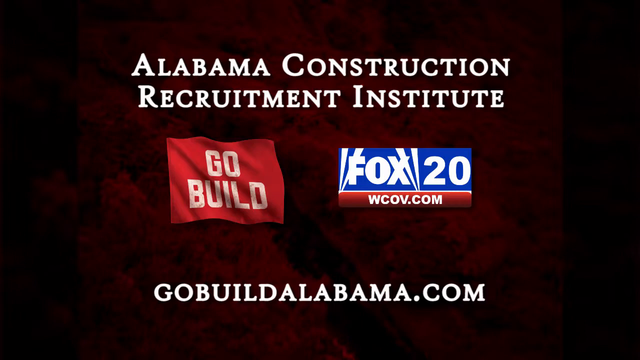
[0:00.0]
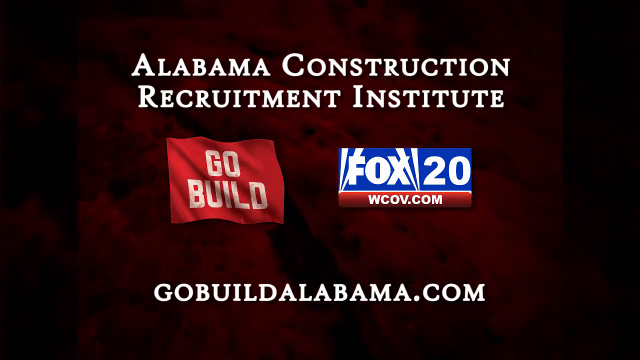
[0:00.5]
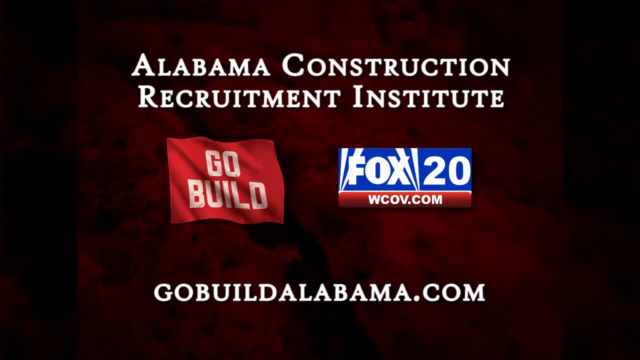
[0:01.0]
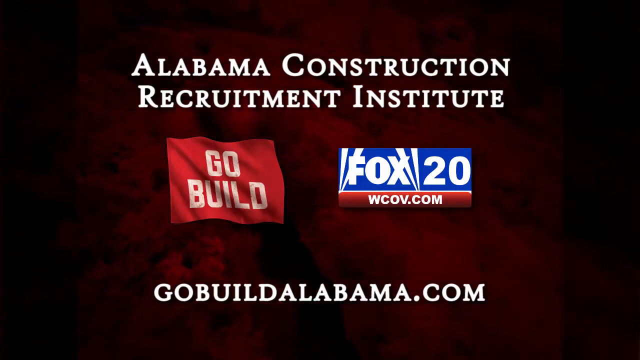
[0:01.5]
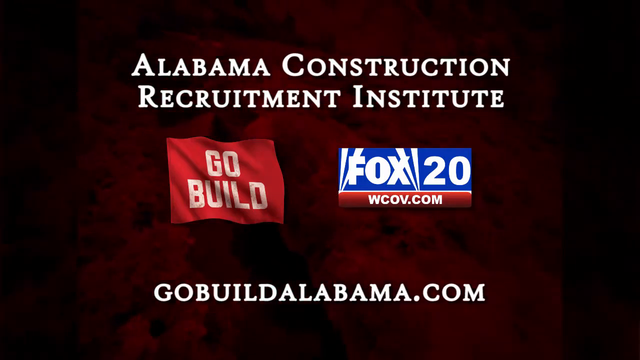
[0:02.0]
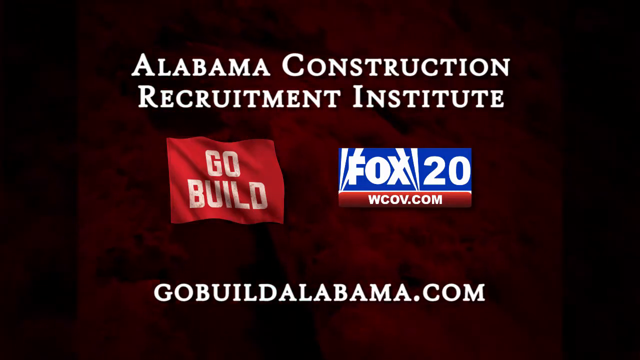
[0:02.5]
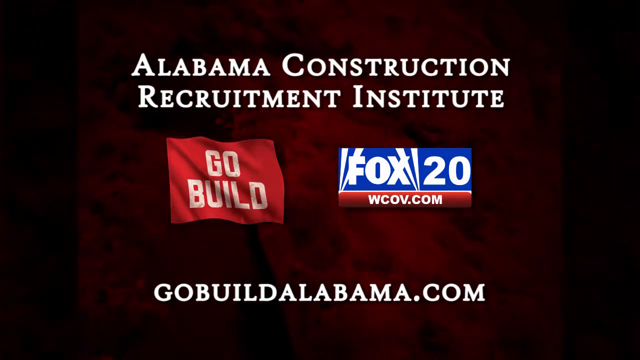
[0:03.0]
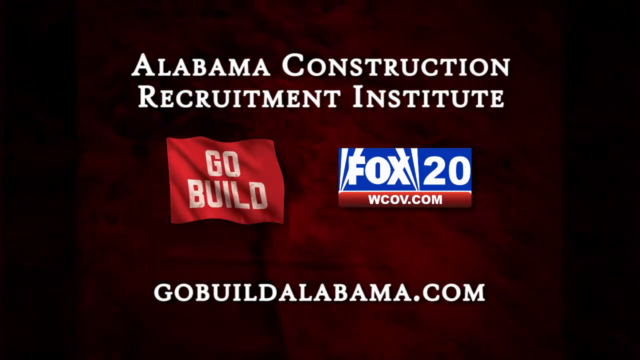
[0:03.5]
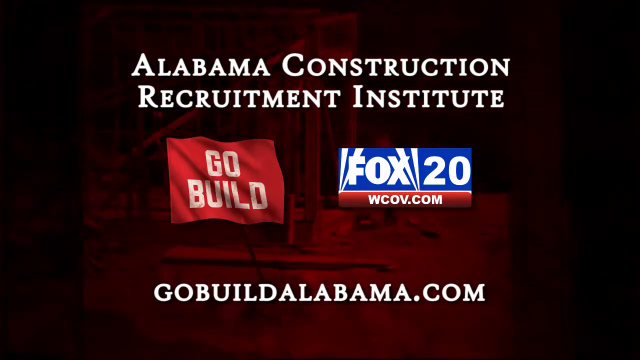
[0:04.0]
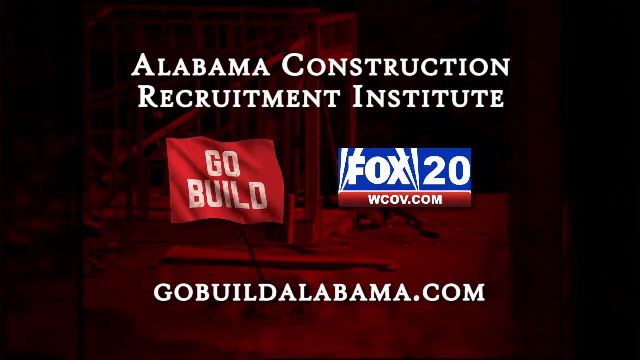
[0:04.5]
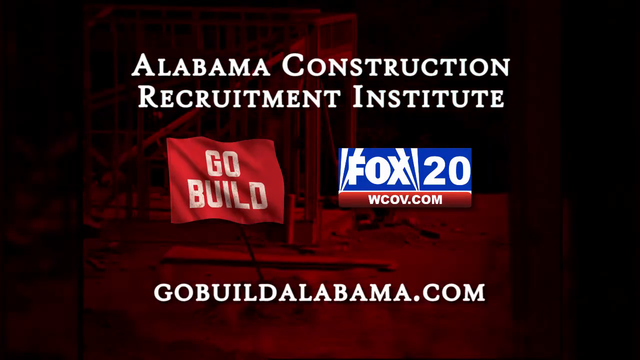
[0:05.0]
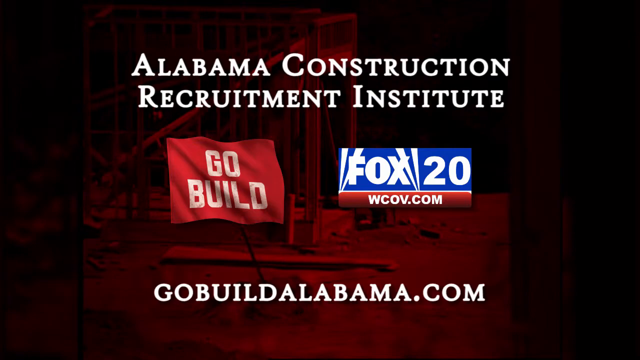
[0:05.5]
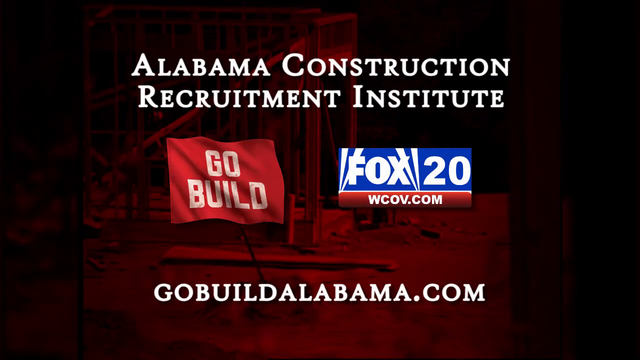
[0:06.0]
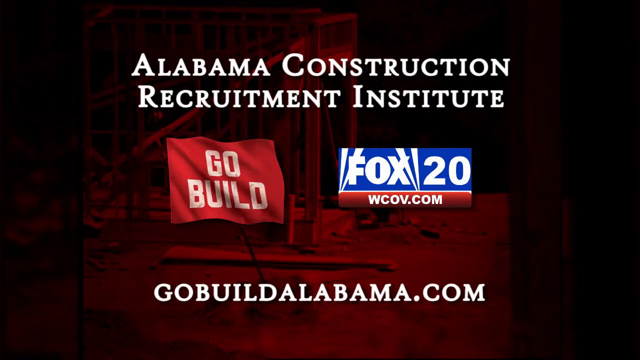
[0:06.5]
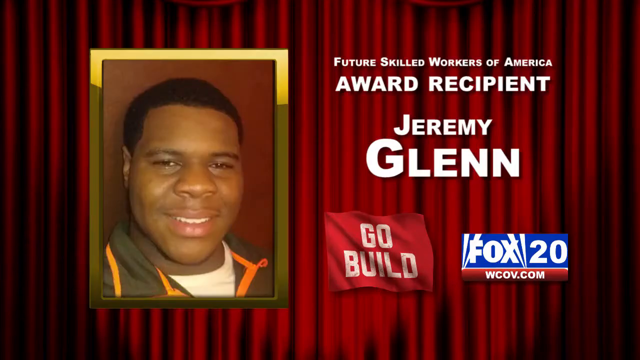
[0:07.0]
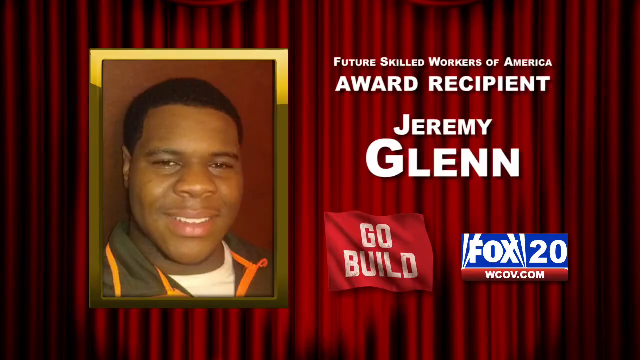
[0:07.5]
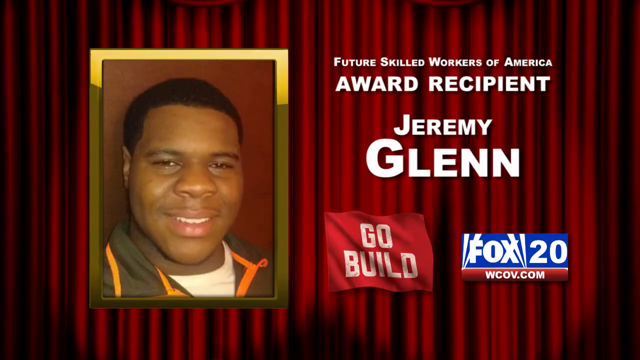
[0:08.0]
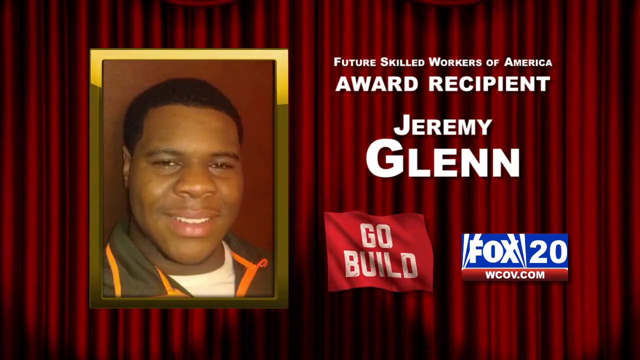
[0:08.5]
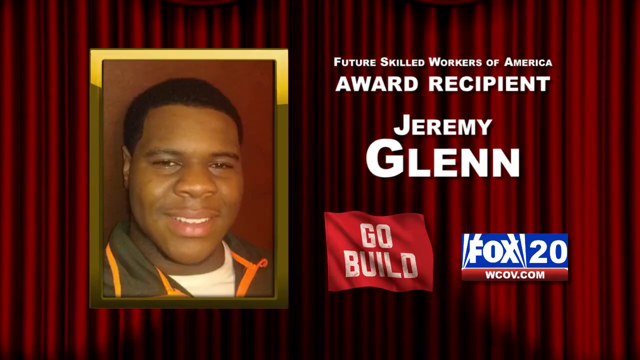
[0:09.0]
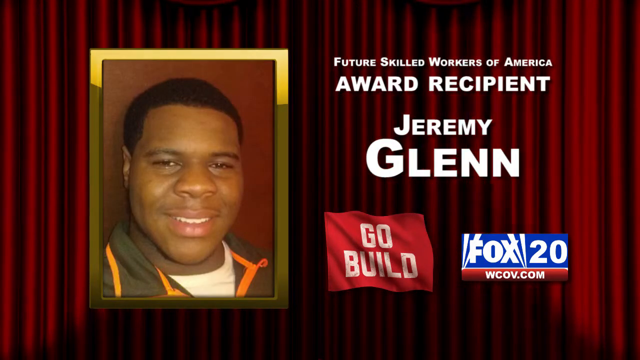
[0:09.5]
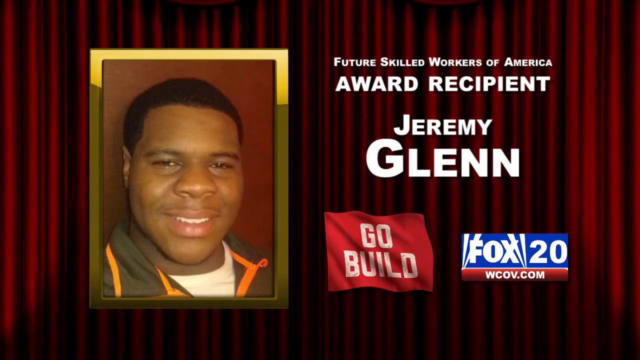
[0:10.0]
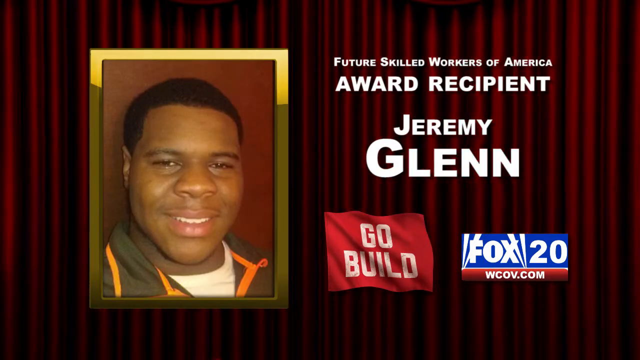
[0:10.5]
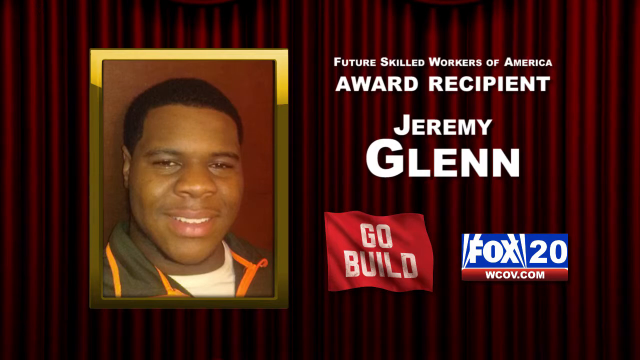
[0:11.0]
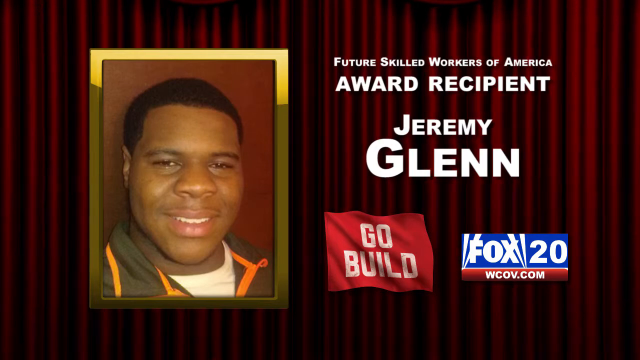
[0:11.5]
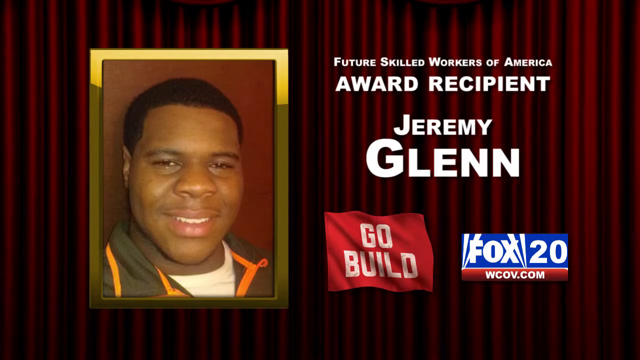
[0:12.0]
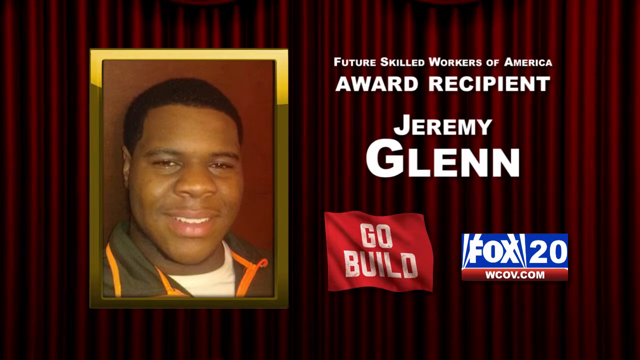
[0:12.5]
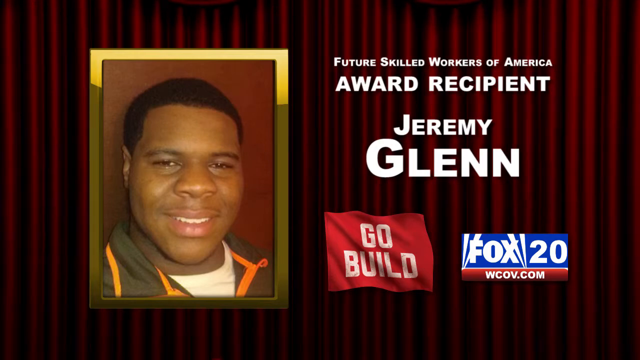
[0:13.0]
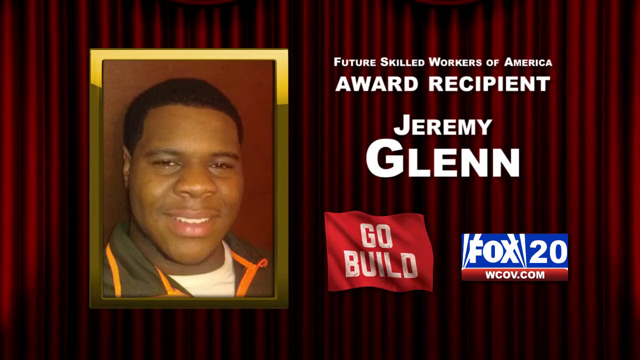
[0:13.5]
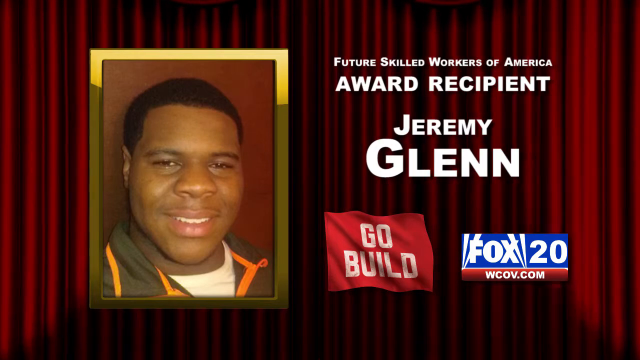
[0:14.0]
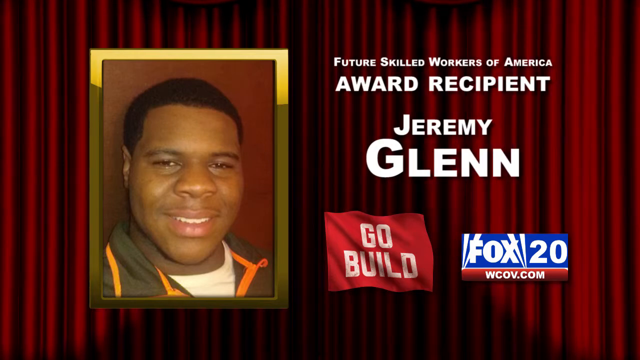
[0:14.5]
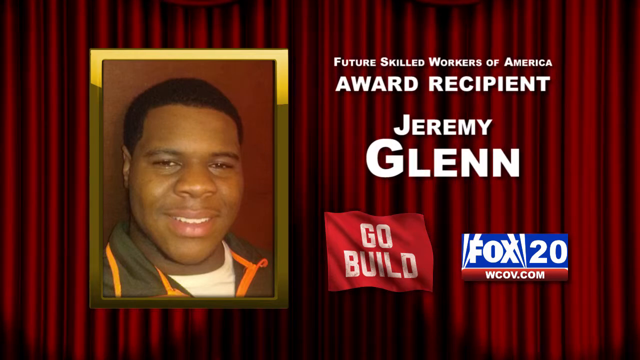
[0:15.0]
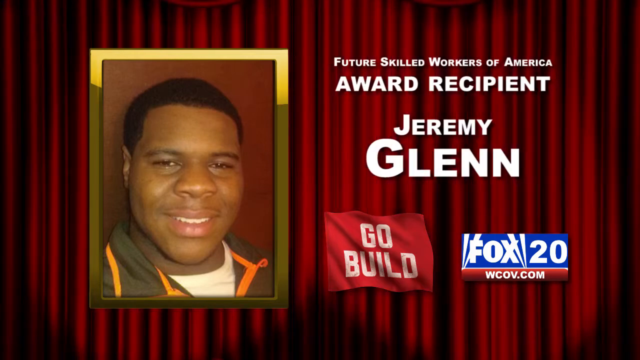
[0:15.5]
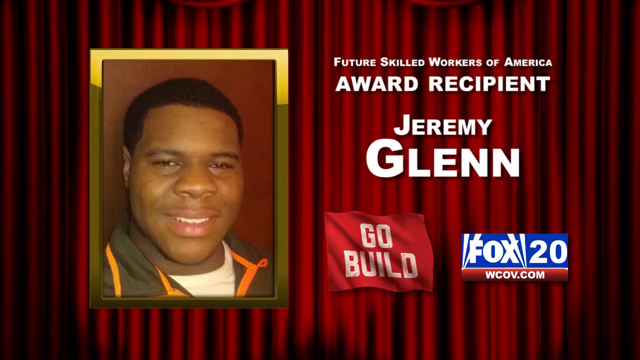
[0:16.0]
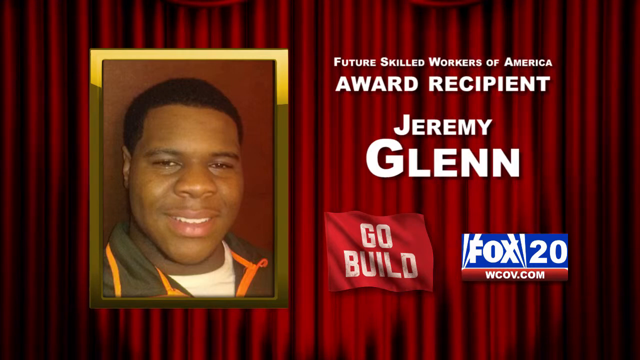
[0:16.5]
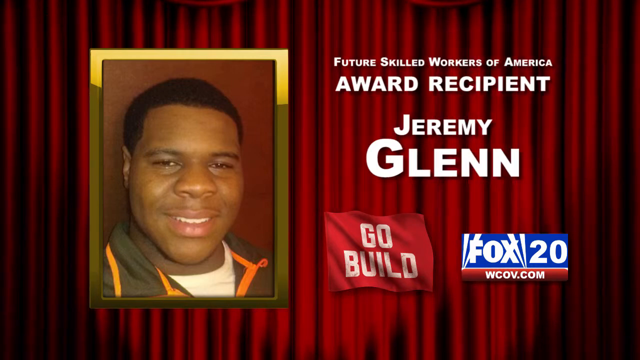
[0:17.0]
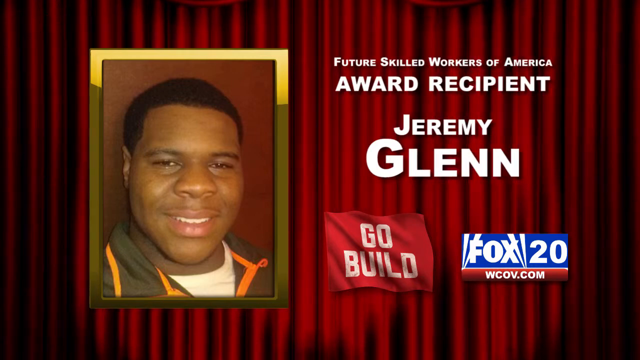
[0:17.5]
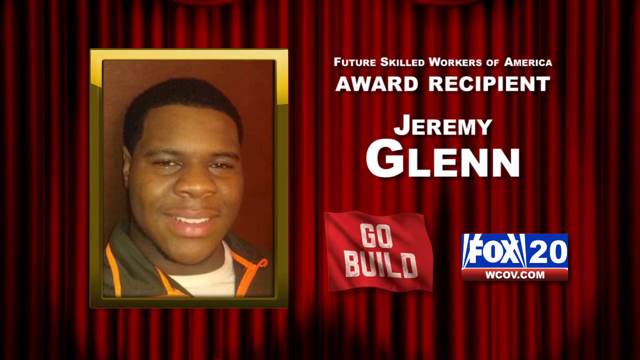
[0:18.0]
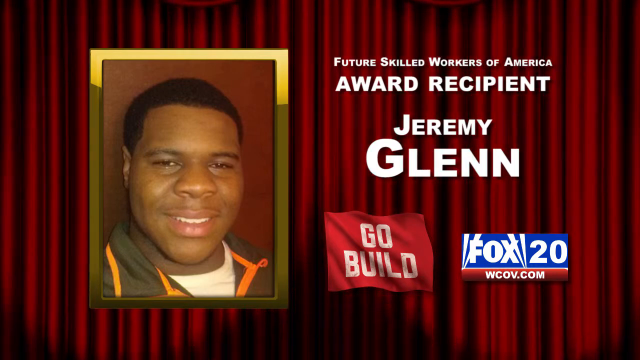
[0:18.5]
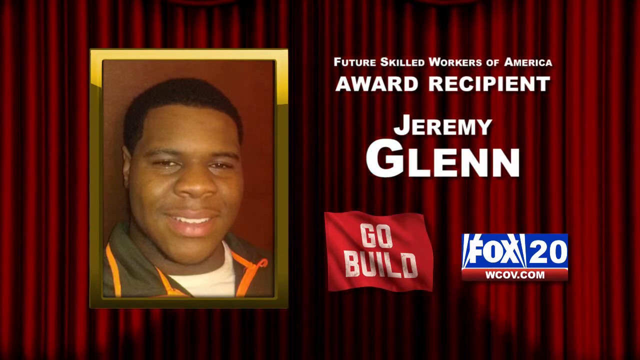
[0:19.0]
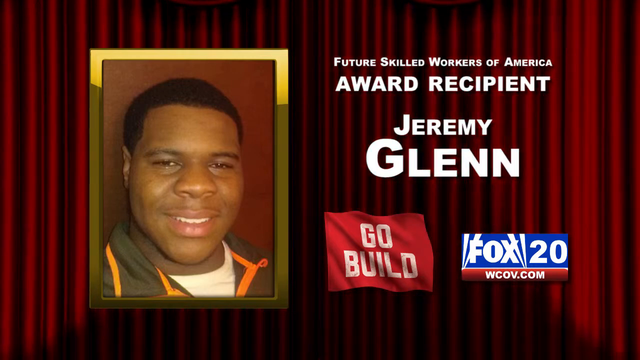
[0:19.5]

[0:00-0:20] The word "Alabama" appears on screen, along with Go Build Alabama, briefly shown for a few seconds. Against a red and black background, a young African-American man appears who looks like he has won an award; he is apparently around 20. He has a smile on his face and seems to wear a brown jacket with orange trim on the collar, and there is a gold frame around him. Next to him the text reads "future skilled workers of America award recipient Jeremy Glenn." Underneath that are Go Build and the Fox 20 logo, which is still visible, along with "Fox 20 WCOV.com." All of the words are in capital letters, and Go Build appears to be on a flag.